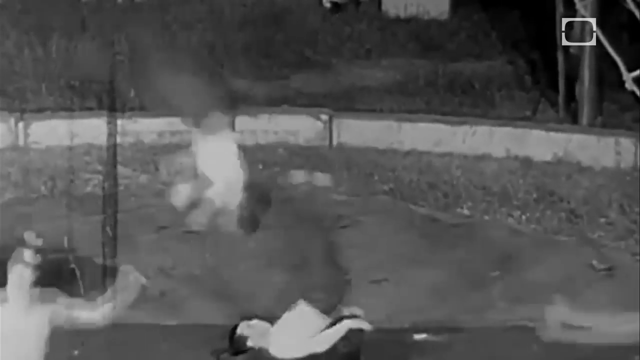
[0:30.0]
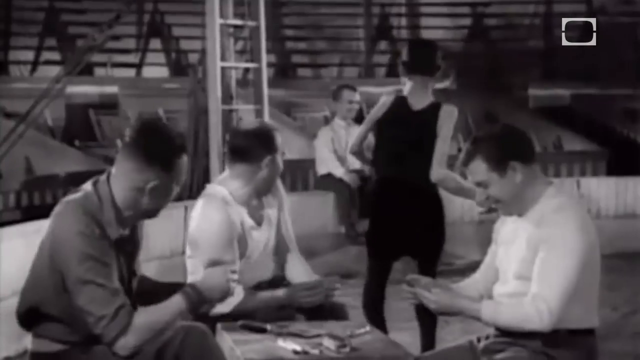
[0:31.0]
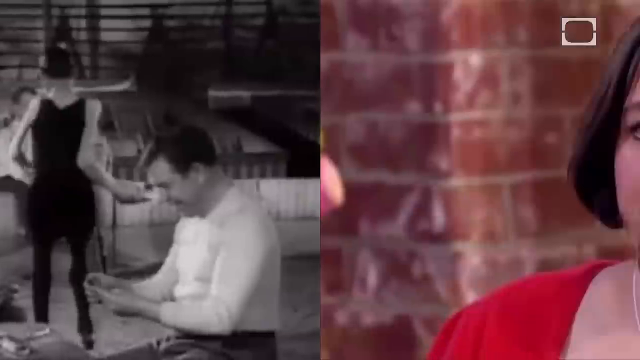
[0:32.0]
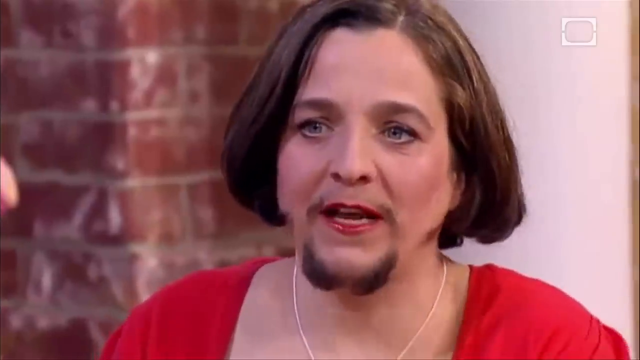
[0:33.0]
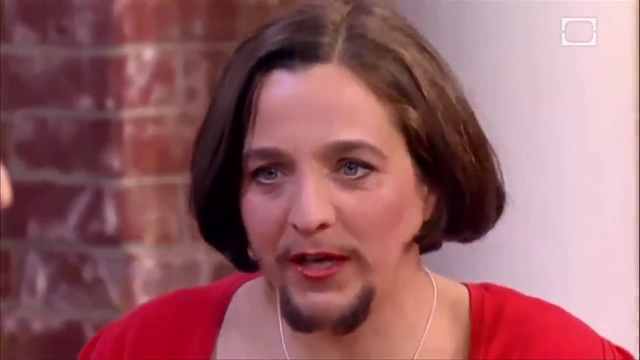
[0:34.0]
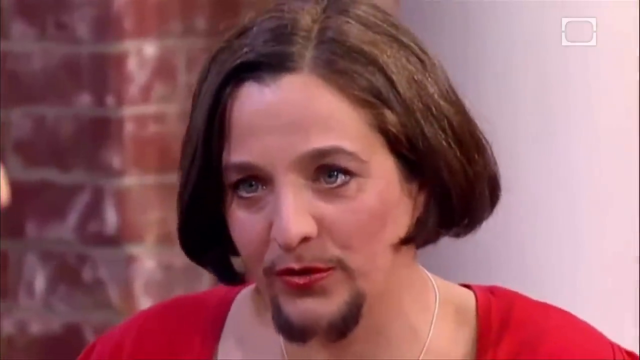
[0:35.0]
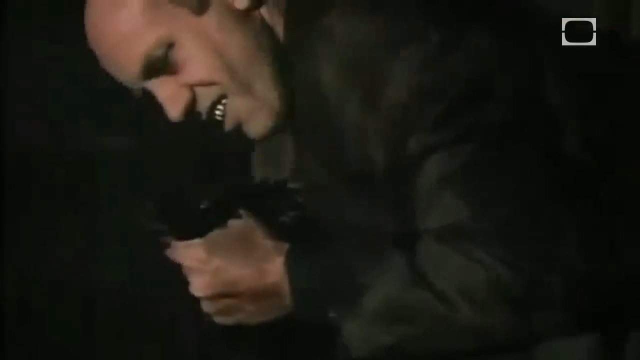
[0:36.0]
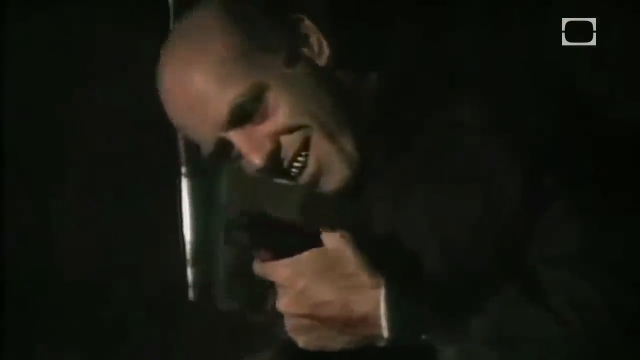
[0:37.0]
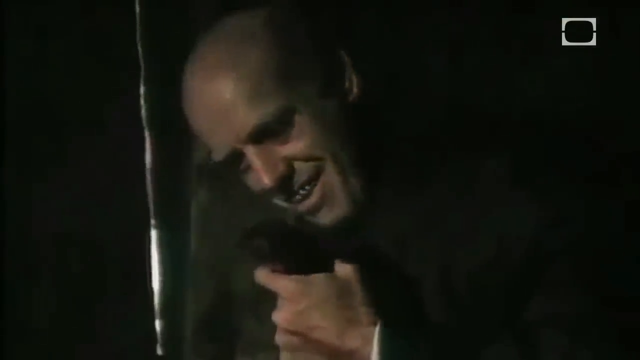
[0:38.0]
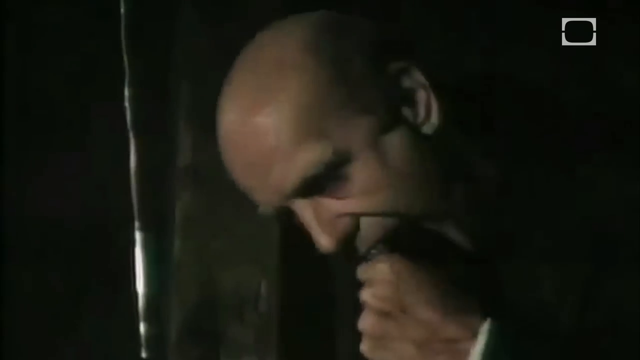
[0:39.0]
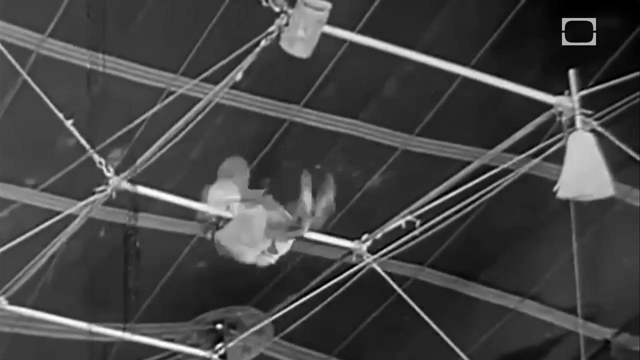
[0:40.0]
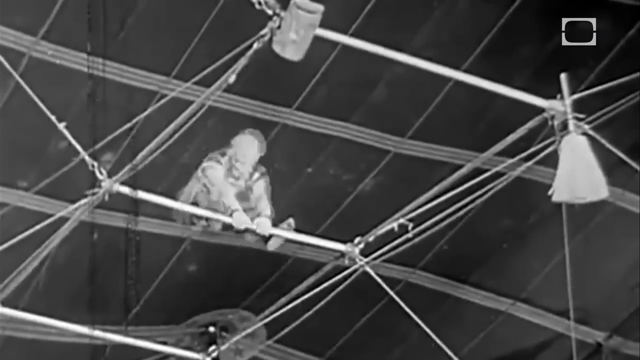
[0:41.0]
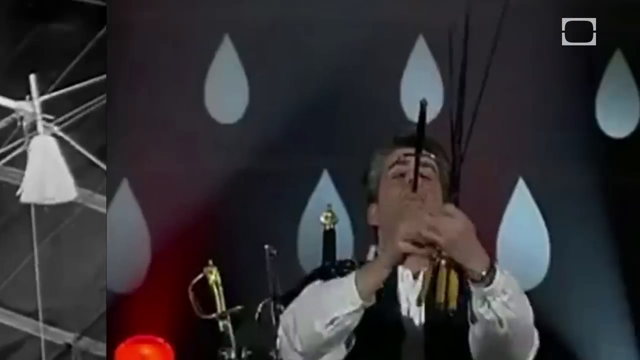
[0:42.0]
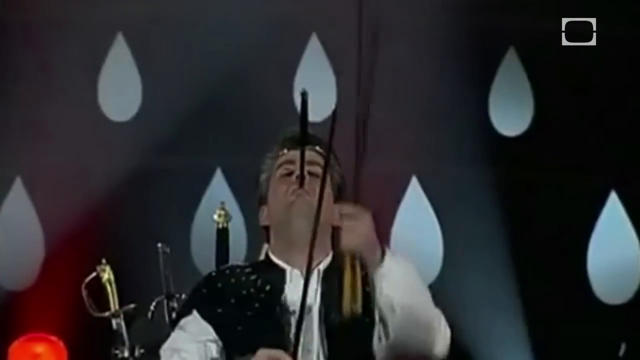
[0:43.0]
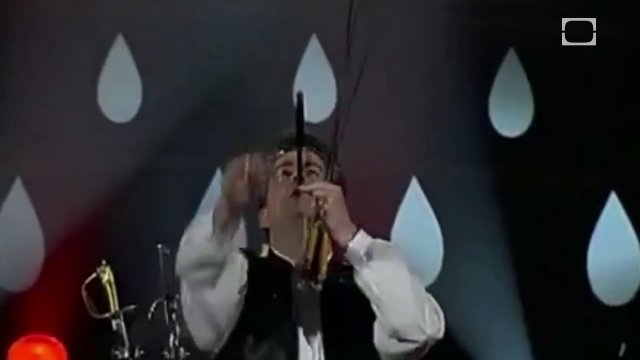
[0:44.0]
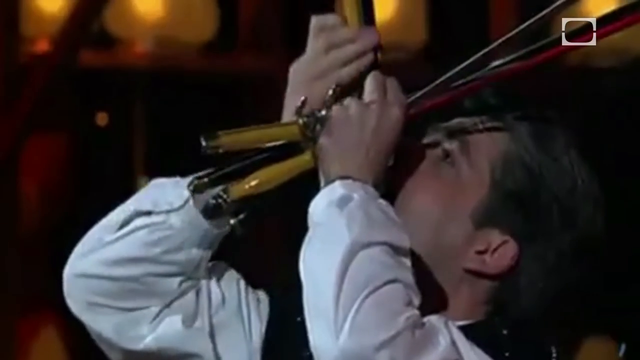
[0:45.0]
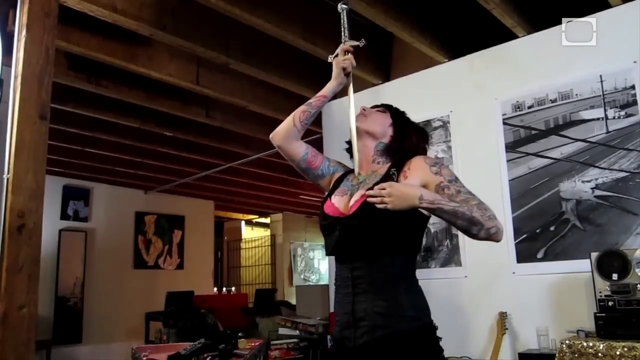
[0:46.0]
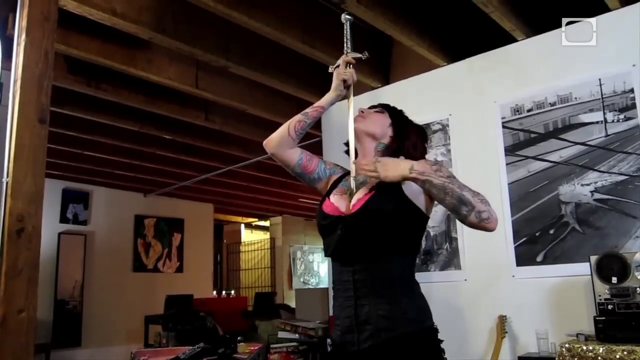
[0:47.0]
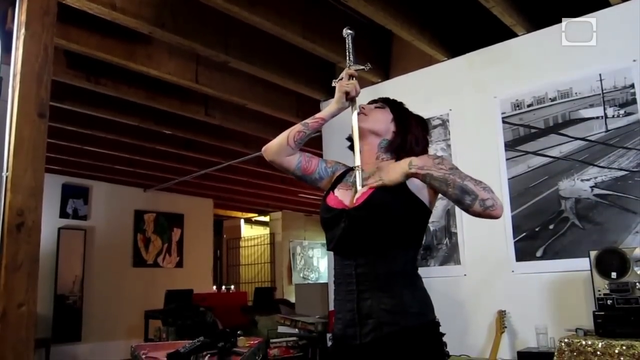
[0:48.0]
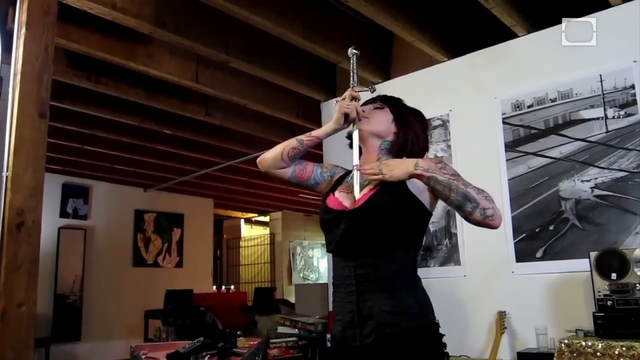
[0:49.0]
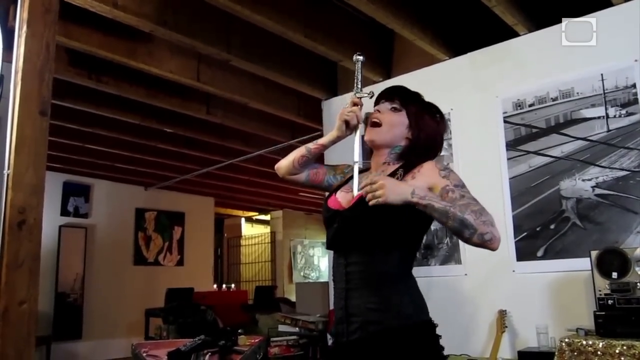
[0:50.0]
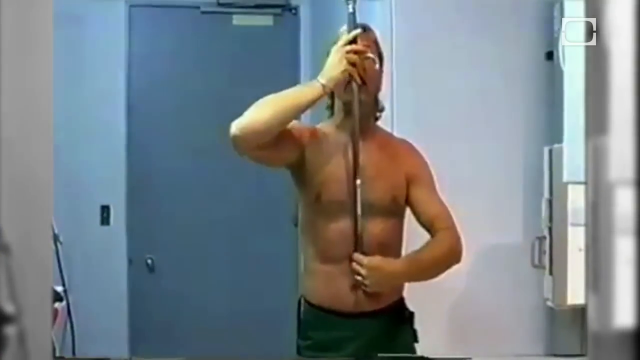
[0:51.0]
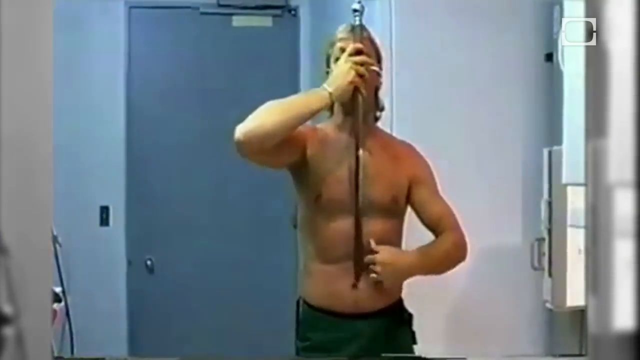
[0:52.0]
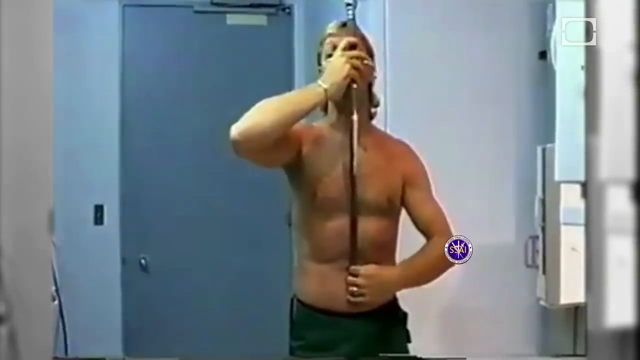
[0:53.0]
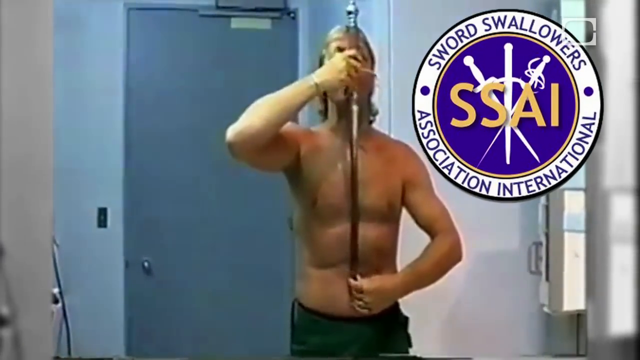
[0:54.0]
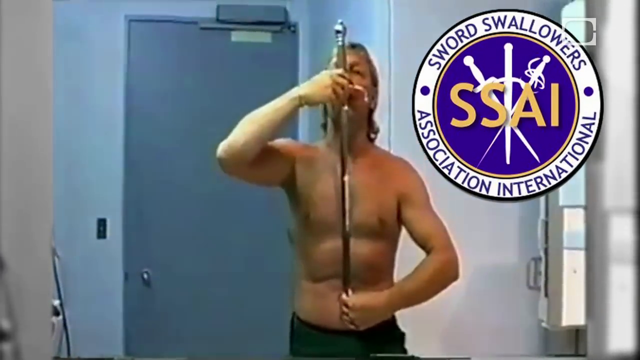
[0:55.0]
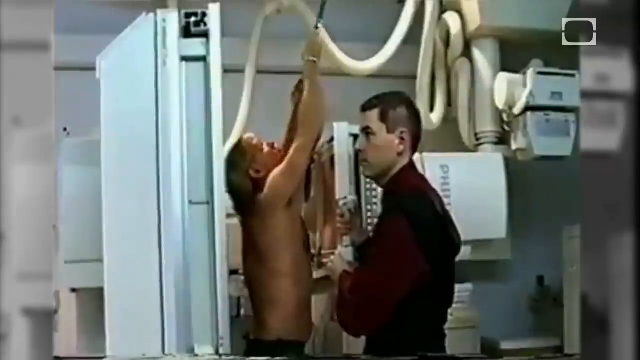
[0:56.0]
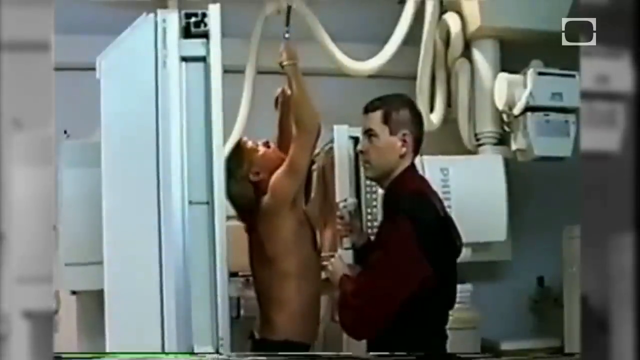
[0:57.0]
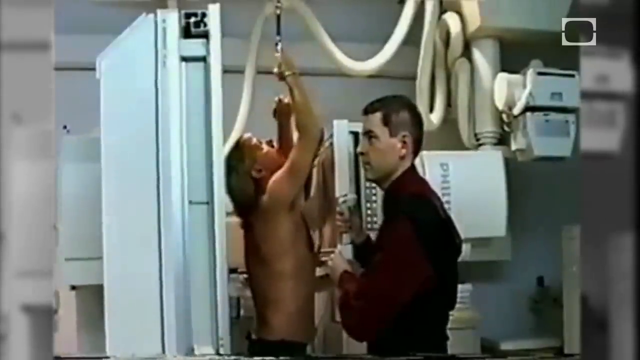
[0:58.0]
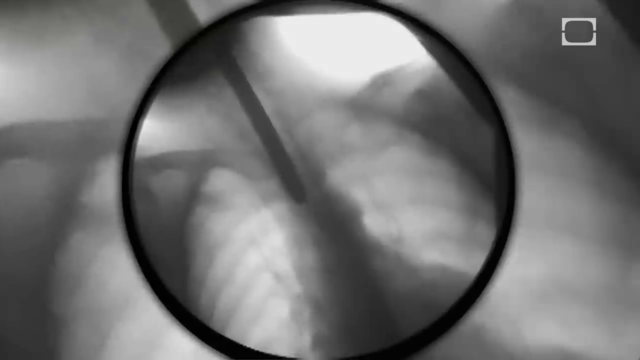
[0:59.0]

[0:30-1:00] What looks like a woman appears wearing a brown goatee; she has short bobbed hair, red lipstick and a red outfit. The video cuts to a picture of a bald man biting into some apparatus, part of what look like different carnival acts: a bearded lady, the bald man biting into something odd, and a clown on a trapeze in black and white. A man puts a whole sword down his mouth while carrying other swords as well. A present-day woman carries a sword and slides it down her shirt into her chest. A man demonstrates how he puts a sword down his mouth, and afterward a black-and-white X-ray diagram shows the sword going down the throat and into the lungs. An emblem for sword swallowers is shown, suggesting there is some sort of association for sword swallowers.